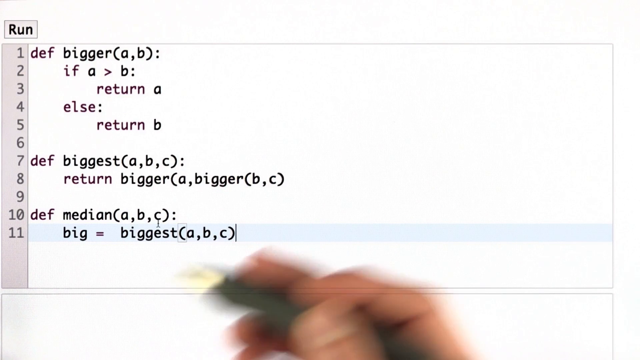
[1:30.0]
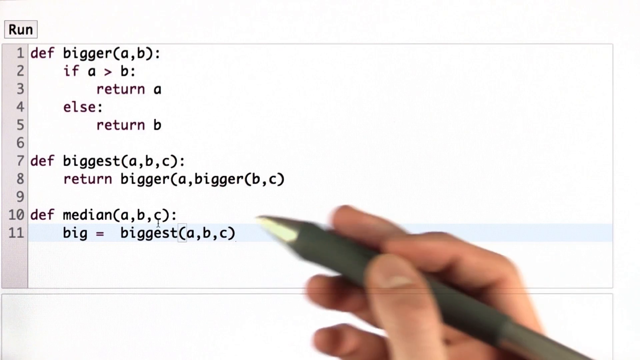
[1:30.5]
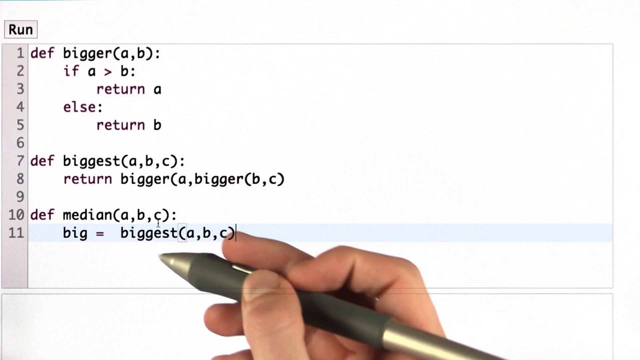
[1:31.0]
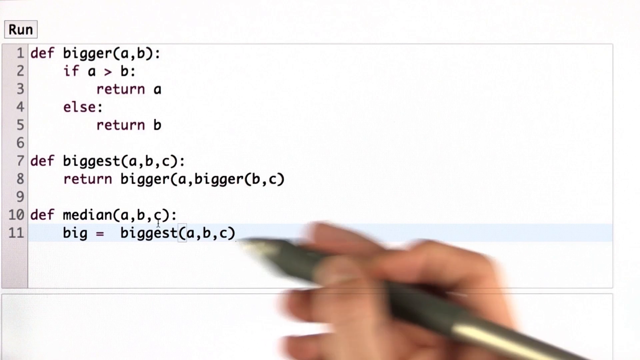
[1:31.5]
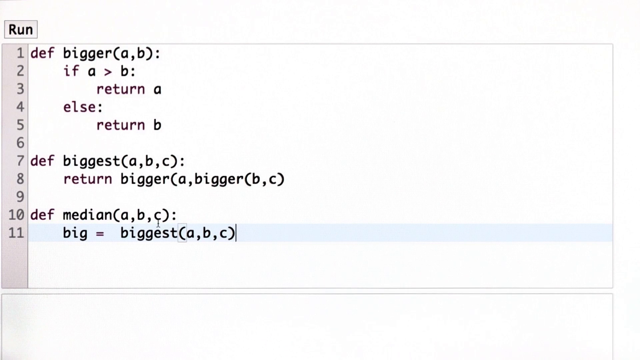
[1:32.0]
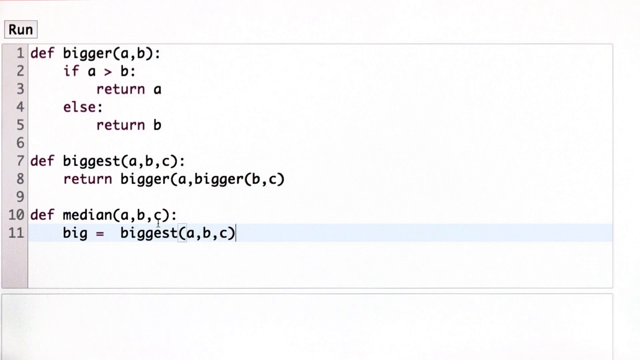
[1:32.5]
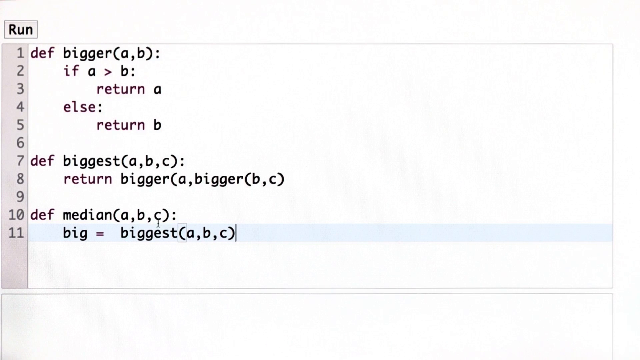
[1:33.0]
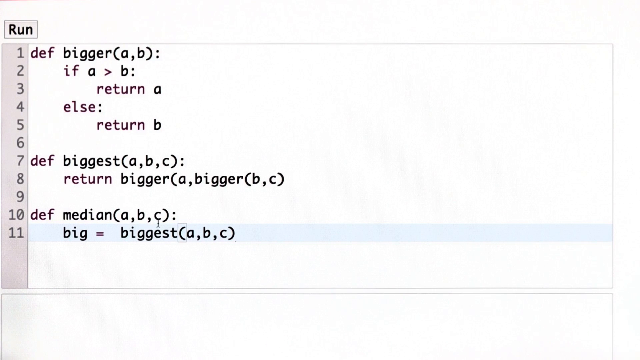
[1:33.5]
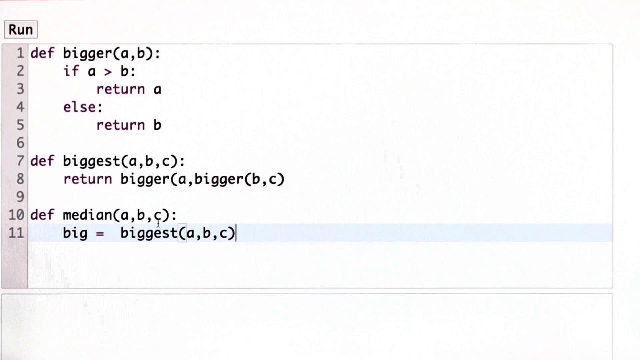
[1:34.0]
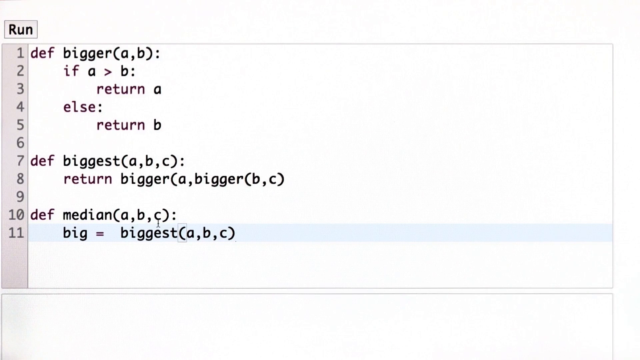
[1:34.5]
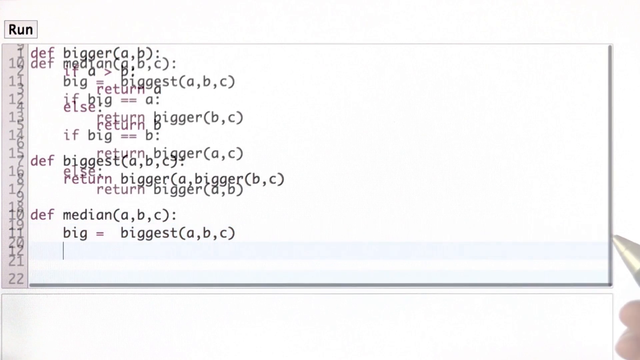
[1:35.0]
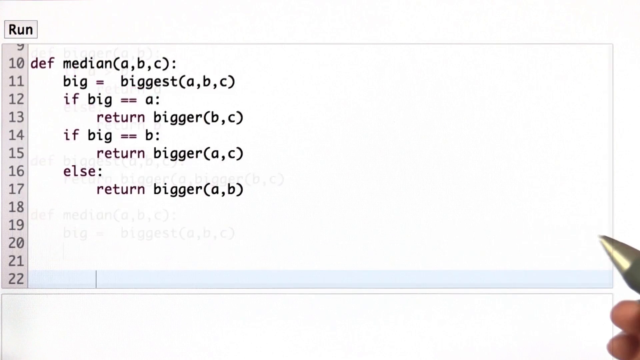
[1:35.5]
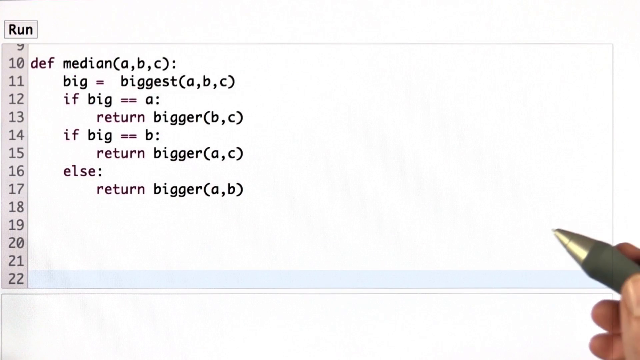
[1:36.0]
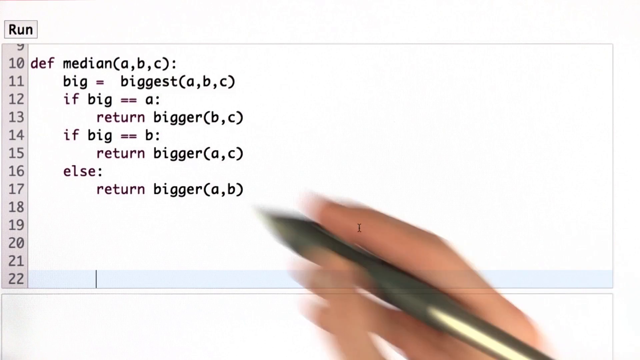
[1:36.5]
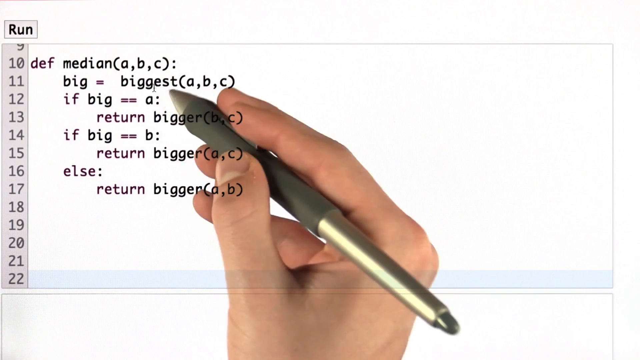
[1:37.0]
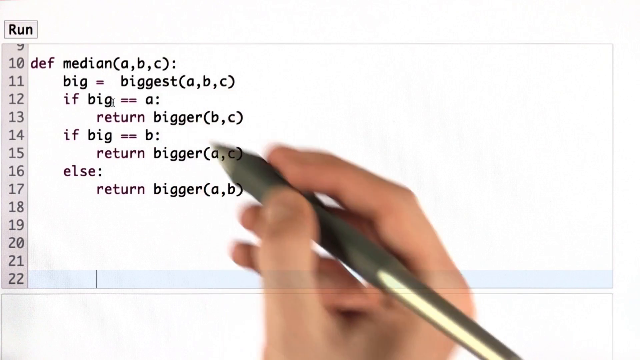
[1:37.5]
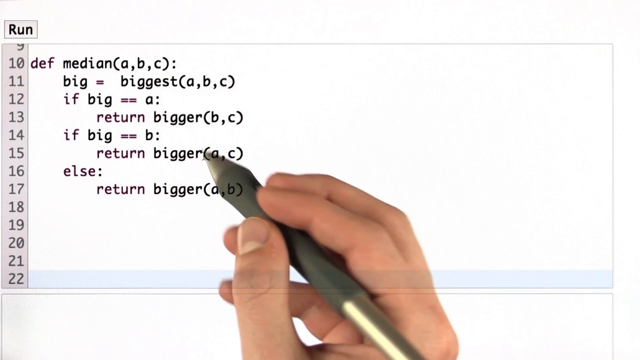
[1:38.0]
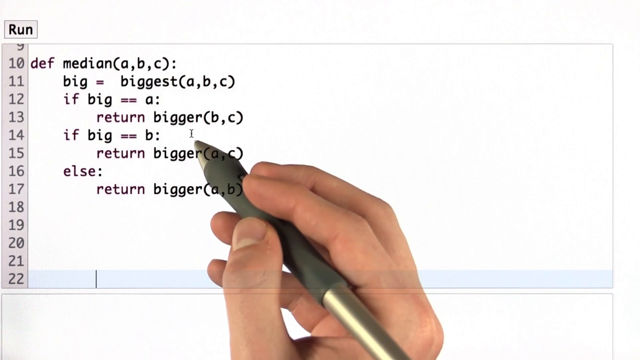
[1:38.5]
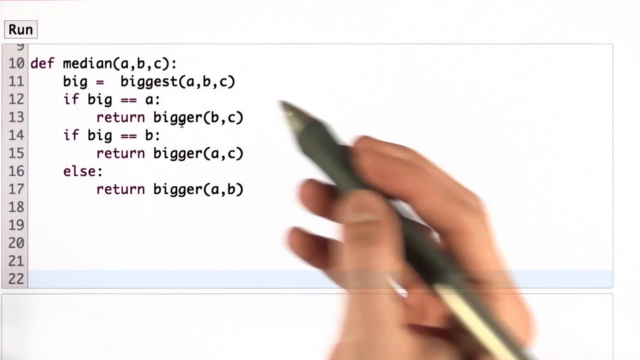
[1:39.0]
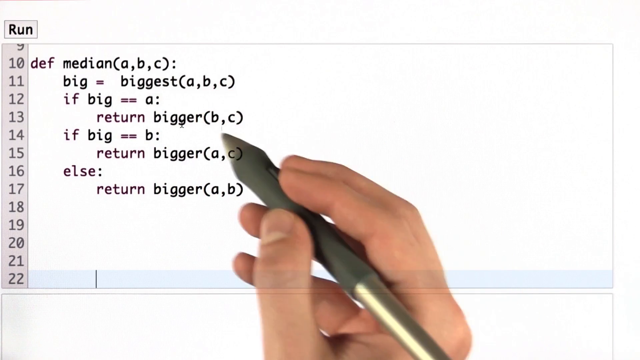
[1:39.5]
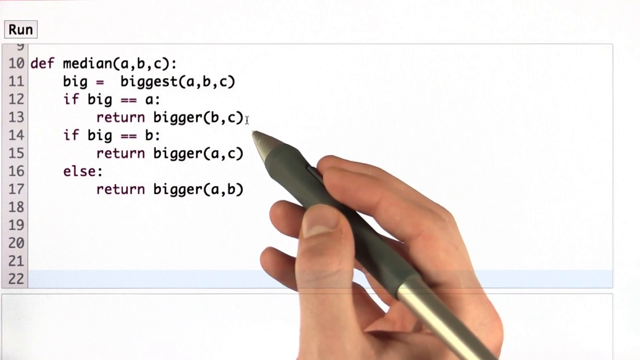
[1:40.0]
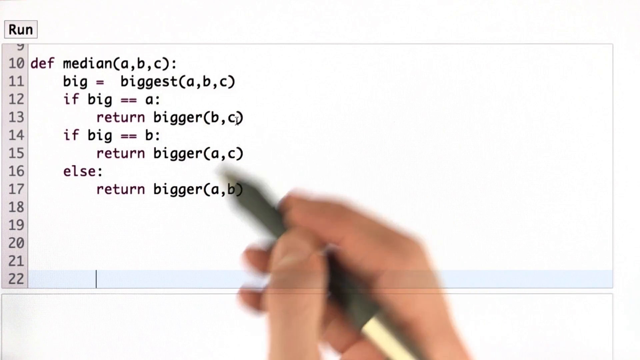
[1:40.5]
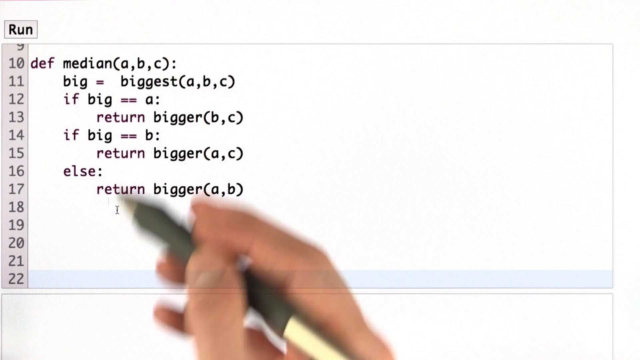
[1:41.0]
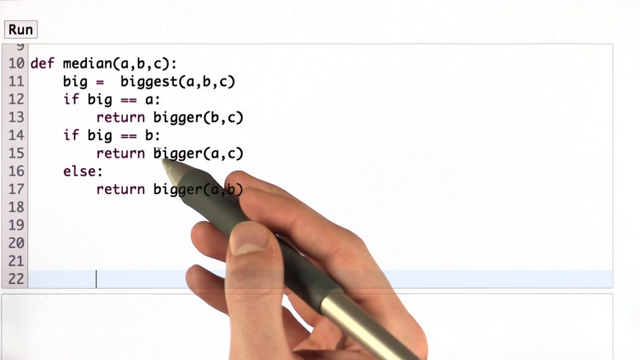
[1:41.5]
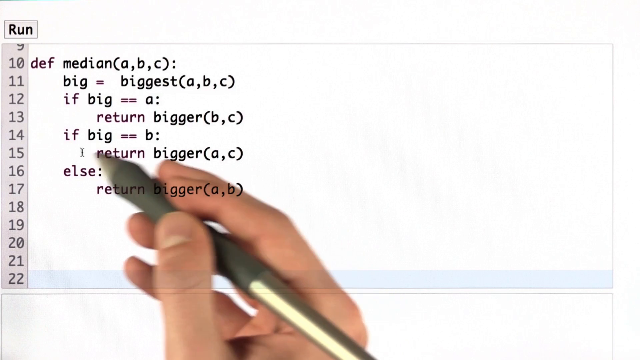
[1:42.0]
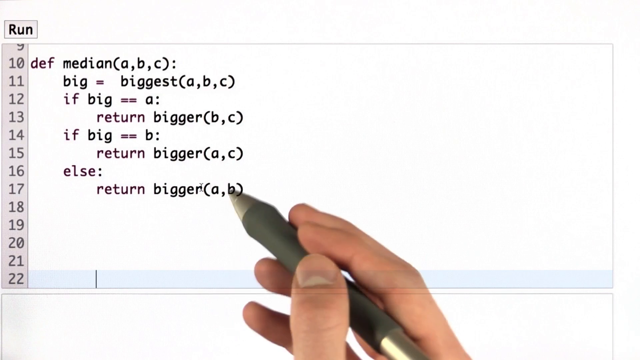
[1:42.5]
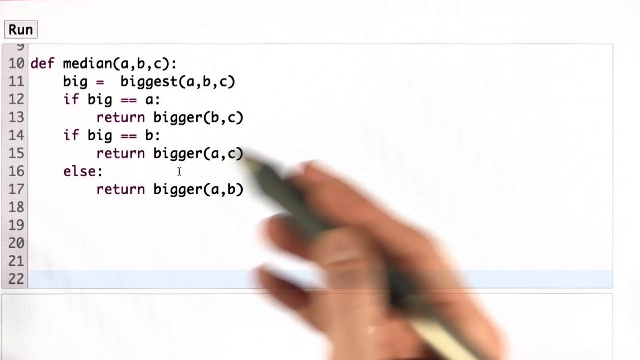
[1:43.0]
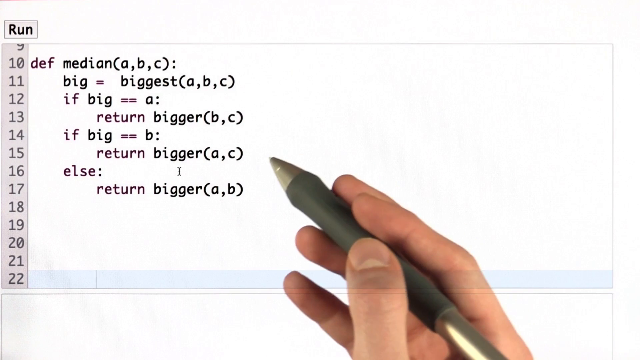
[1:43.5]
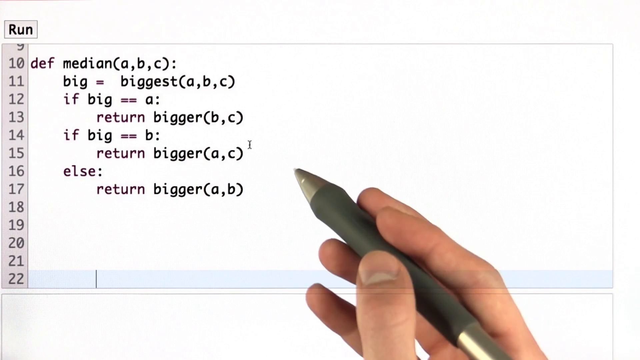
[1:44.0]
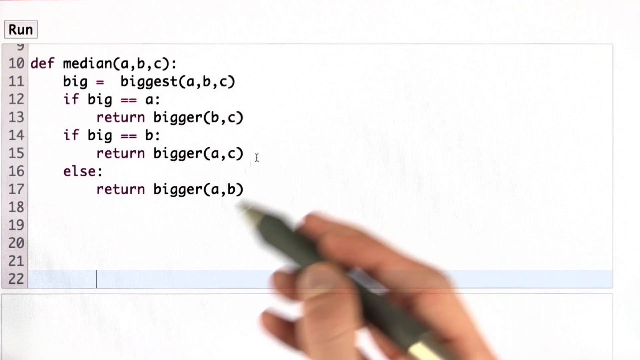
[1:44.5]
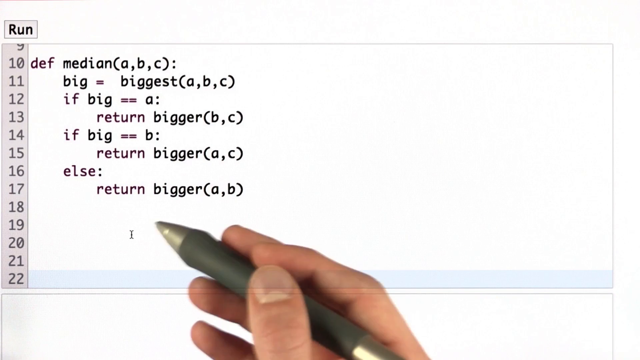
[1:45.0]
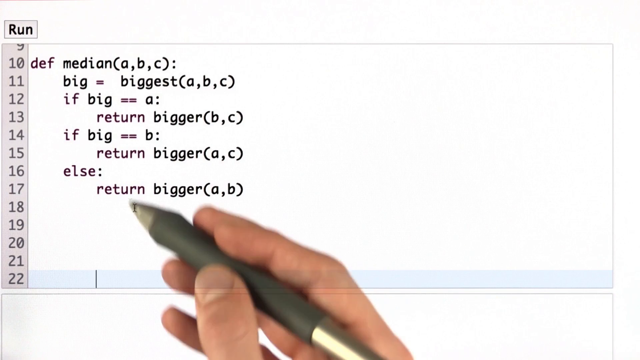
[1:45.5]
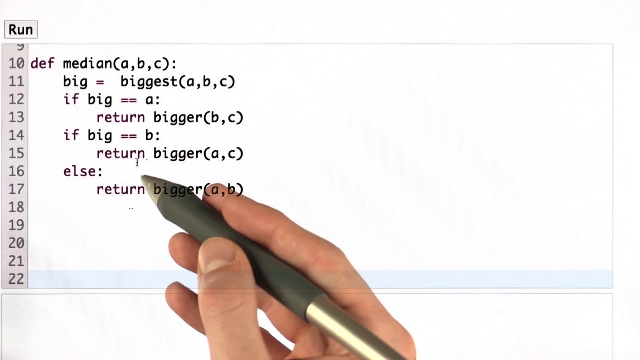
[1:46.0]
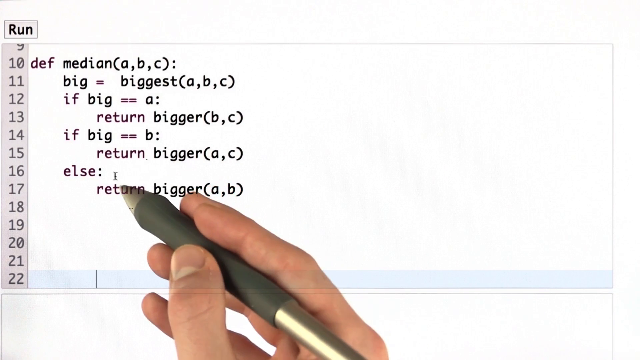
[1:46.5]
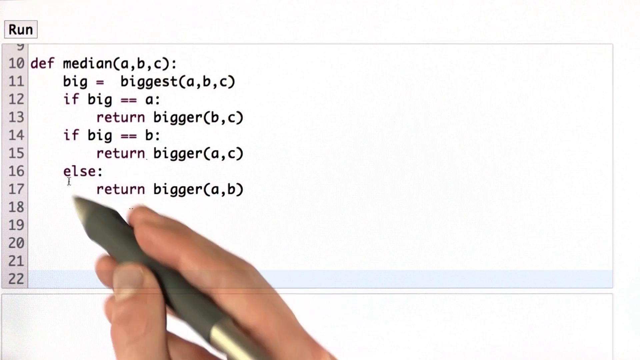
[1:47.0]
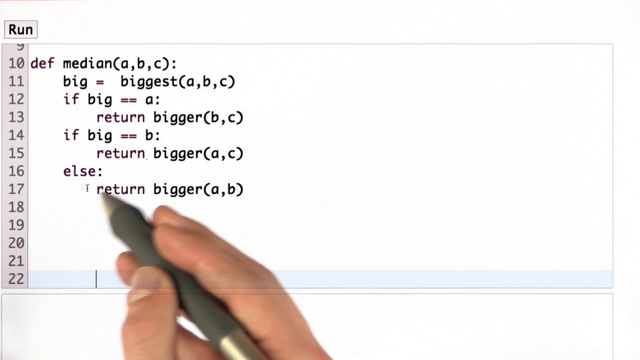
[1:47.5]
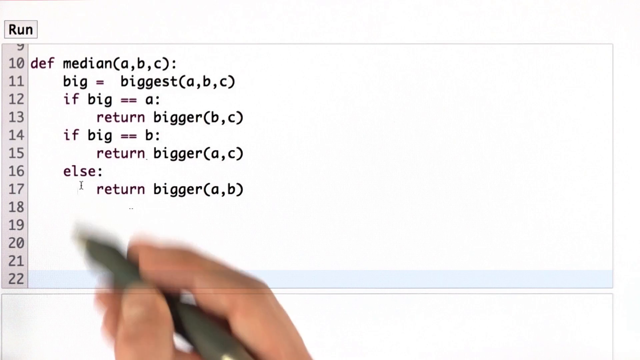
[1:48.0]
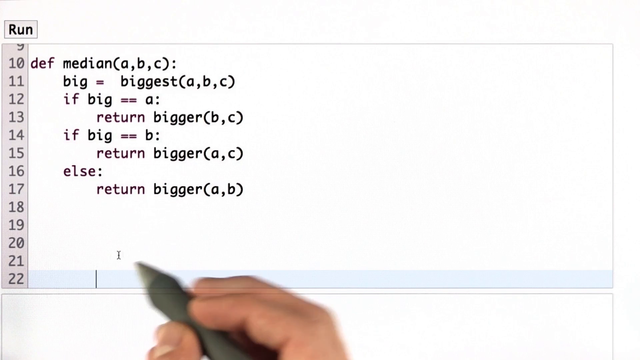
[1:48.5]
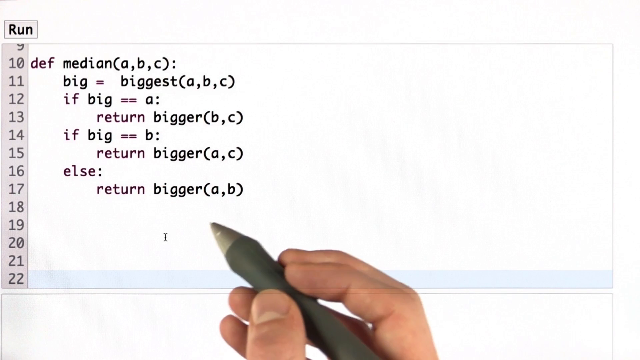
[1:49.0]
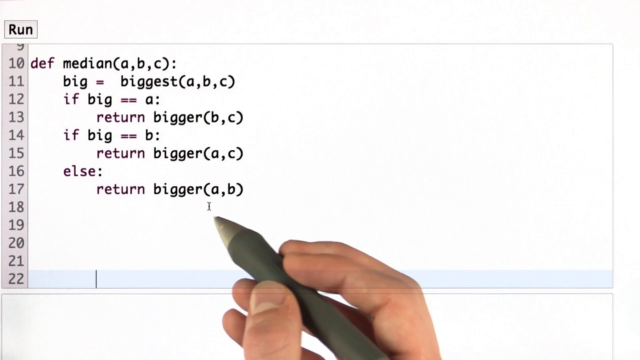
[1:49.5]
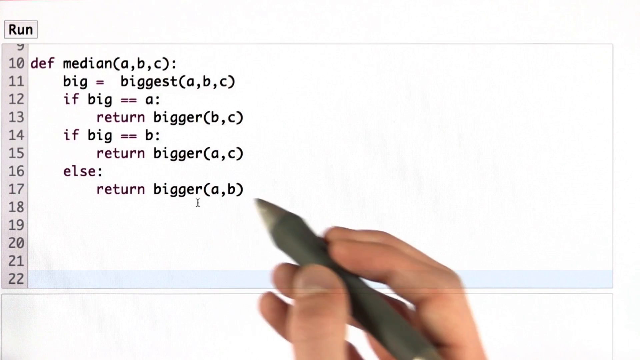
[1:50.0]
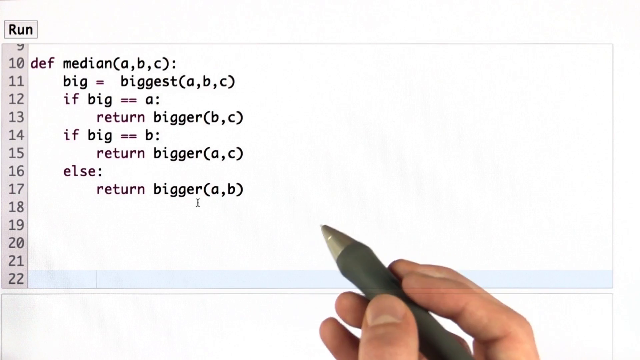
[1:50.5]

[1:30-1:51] More code is written, with lines in brackets and semicolons such as "if a is greater than b", "return a" and, at the beginning of a row, "return b", as well as a line with "biggest a, b, c". The program then changes from there. Overall, the person is creating instructions for a program to find the biggest, median and smallest of A, B and C.